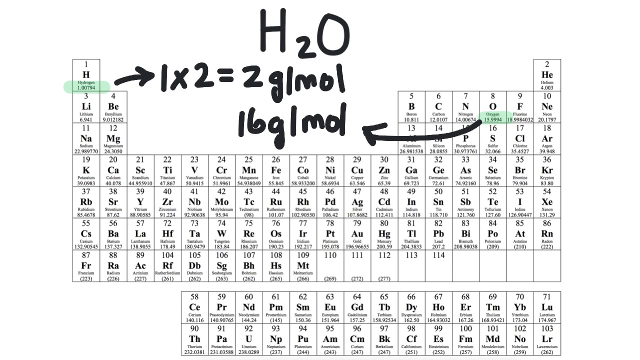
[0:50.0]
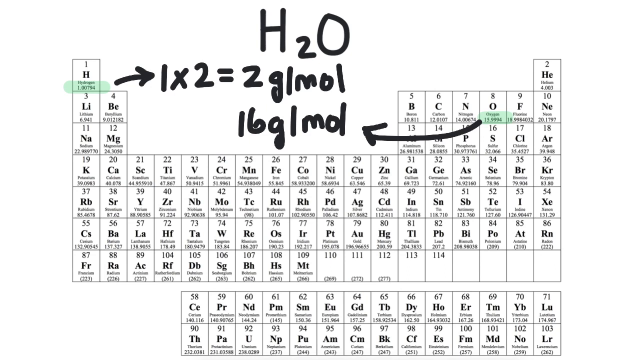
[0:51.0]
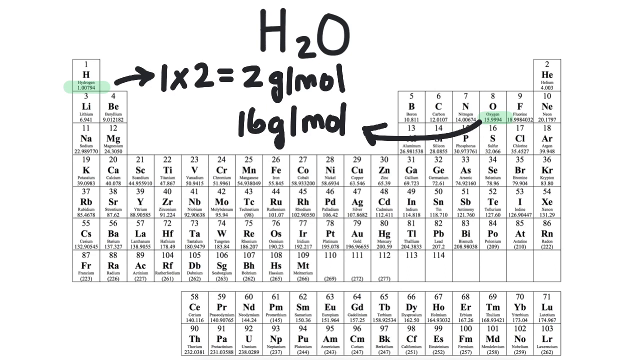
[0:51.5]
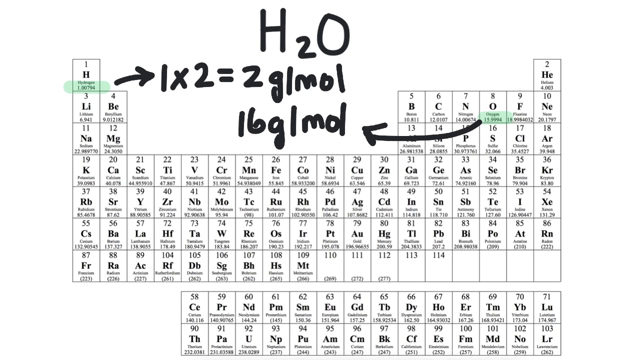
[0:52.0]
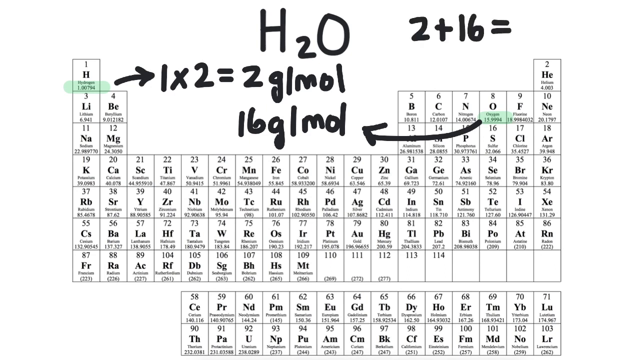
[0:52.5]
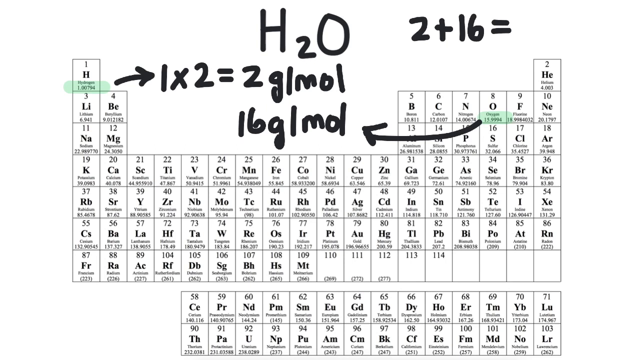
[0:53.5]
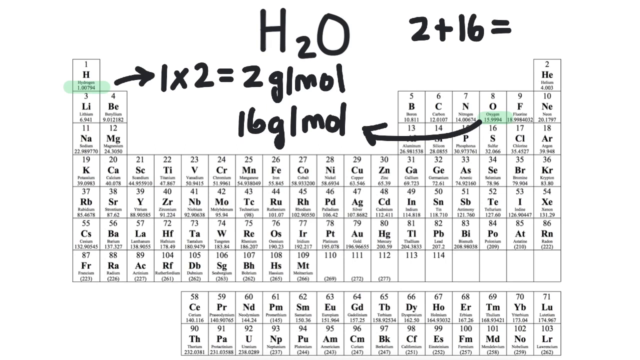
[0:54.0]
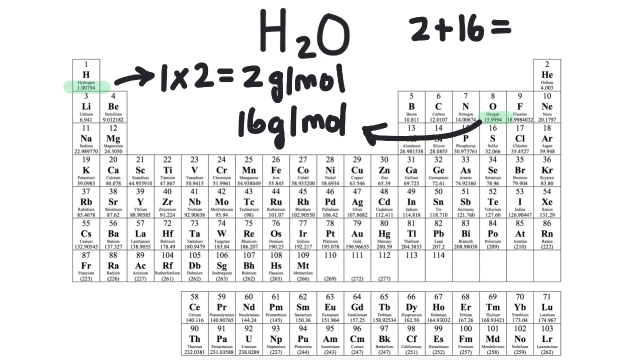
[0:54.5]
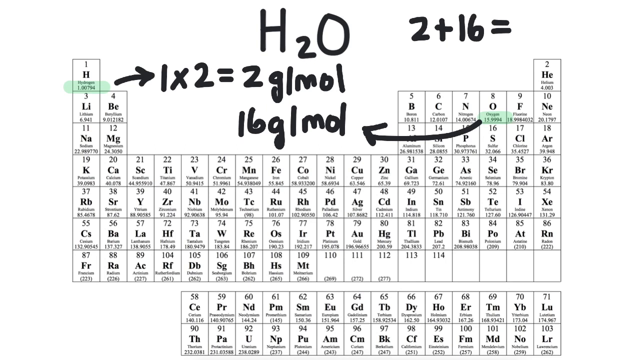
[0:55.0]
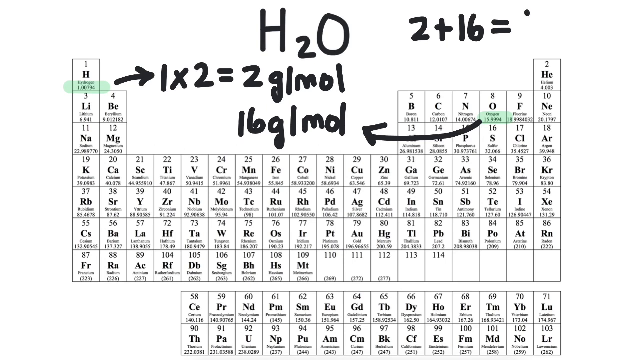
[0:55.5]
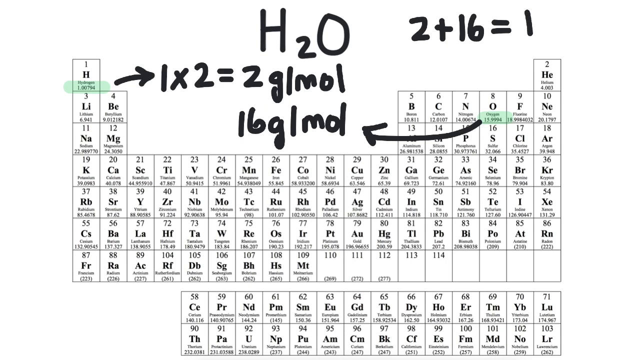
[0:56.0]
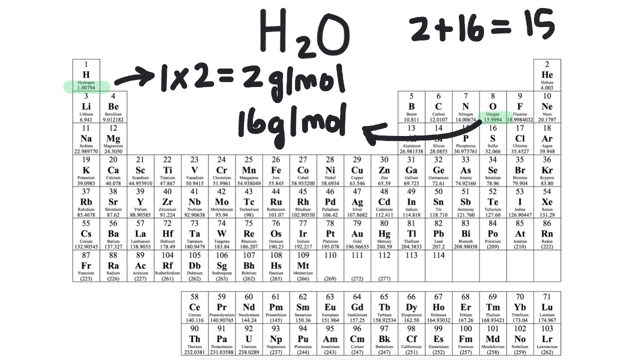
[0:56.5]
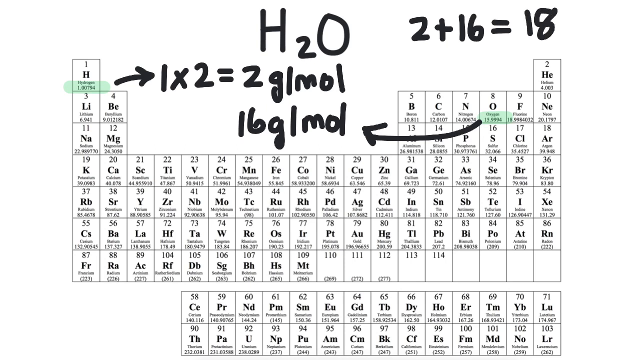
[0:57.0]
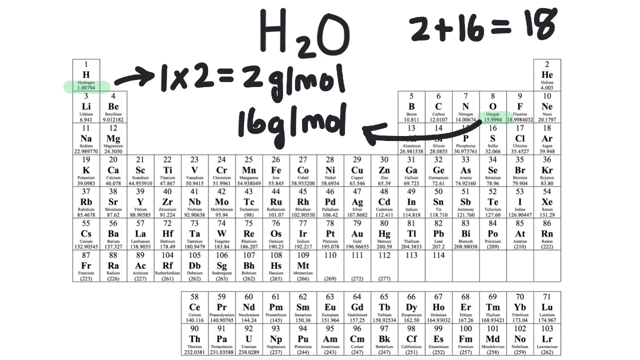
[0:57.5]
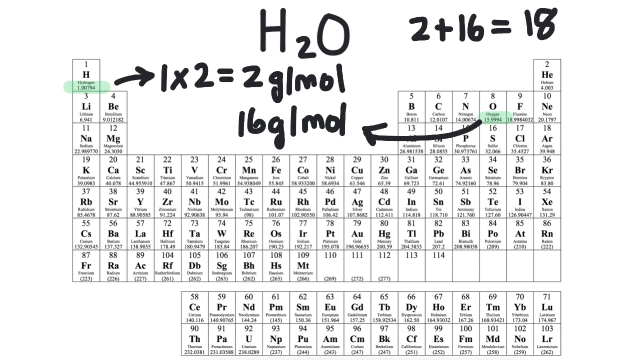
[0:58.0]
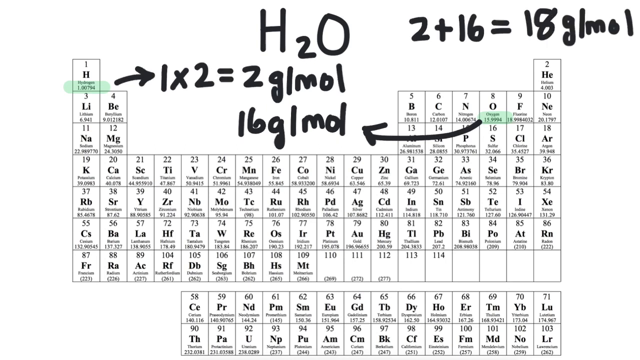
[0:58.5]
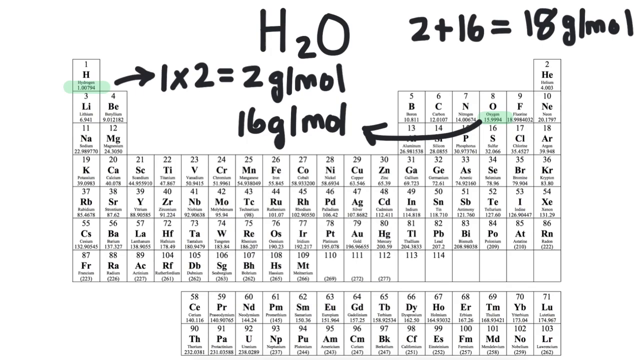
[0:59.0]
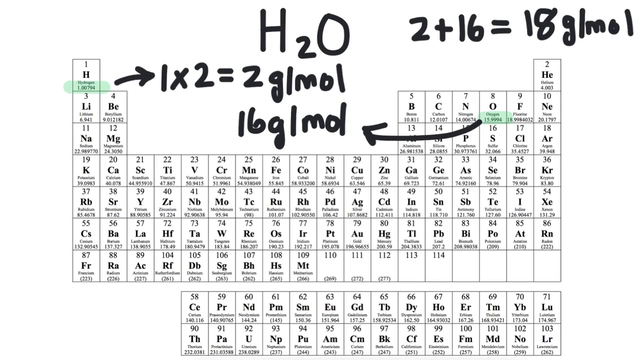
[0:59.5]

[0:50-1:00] Hydrogen and oxygen are shown on the Mendeleev table along with a problem to solve. The calculation shows 1 times 2 in g/mol for hydrogen, 16 g/mol for oxygen, and 2 plus 16 equals 18 g/mol.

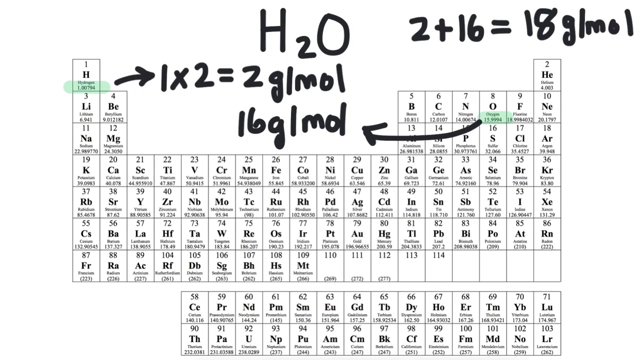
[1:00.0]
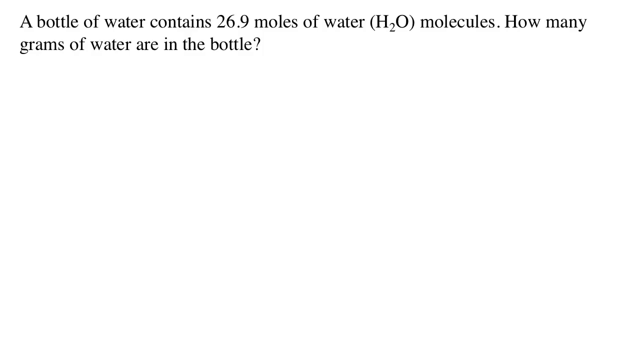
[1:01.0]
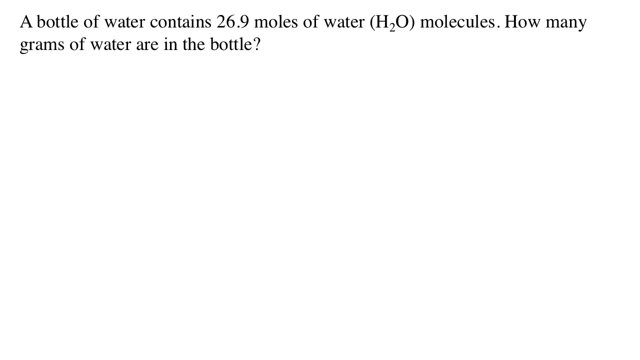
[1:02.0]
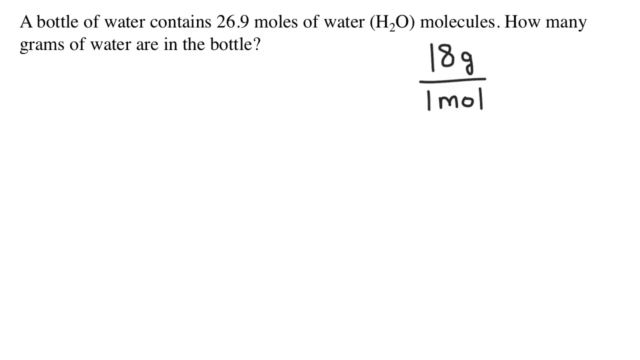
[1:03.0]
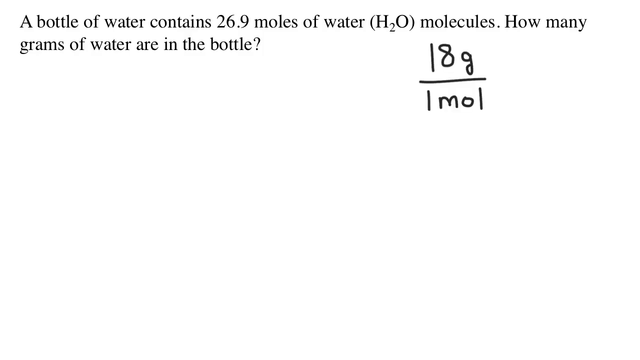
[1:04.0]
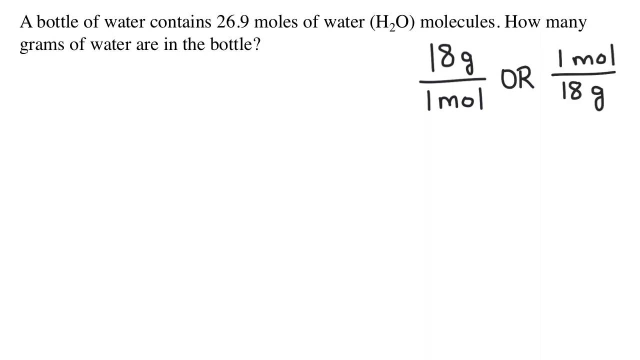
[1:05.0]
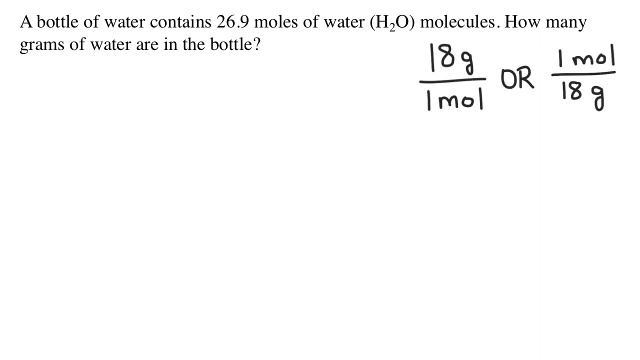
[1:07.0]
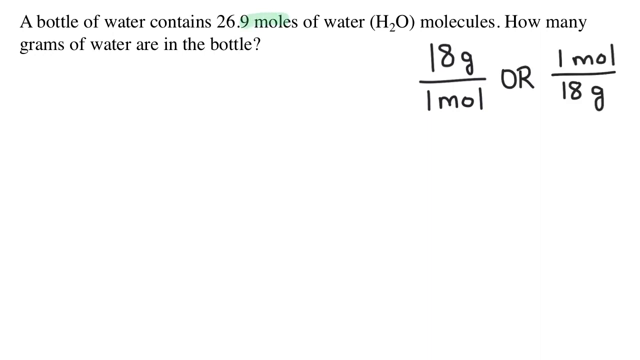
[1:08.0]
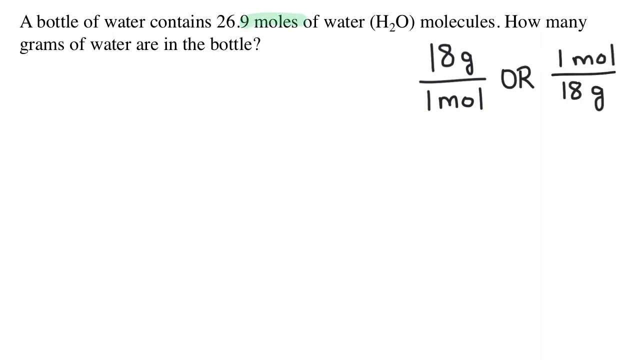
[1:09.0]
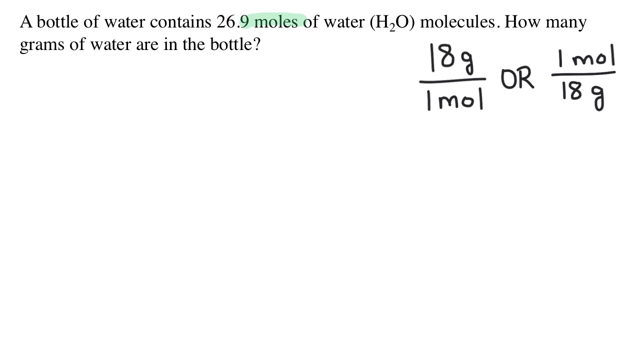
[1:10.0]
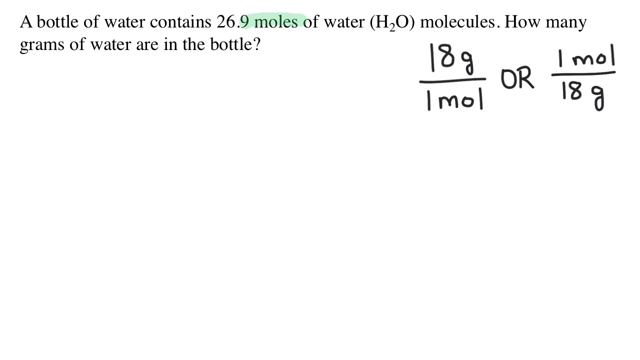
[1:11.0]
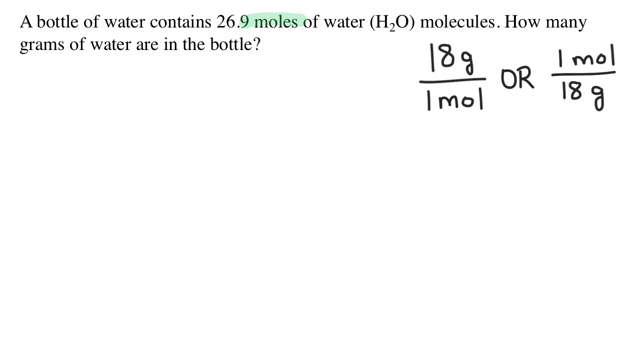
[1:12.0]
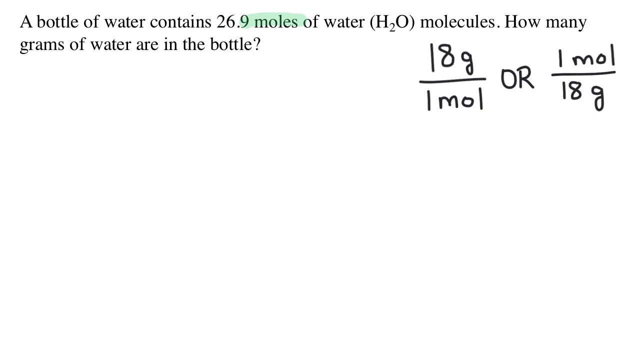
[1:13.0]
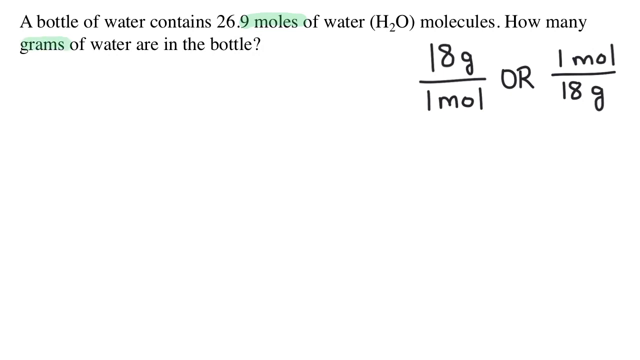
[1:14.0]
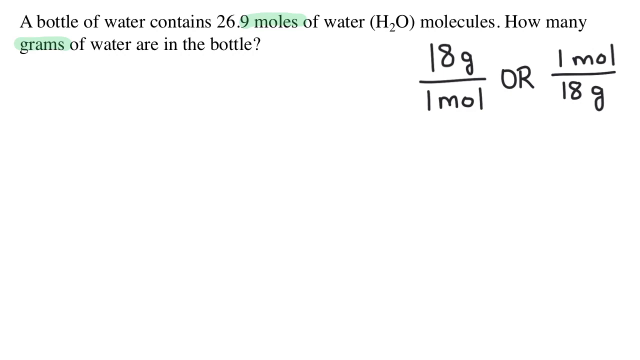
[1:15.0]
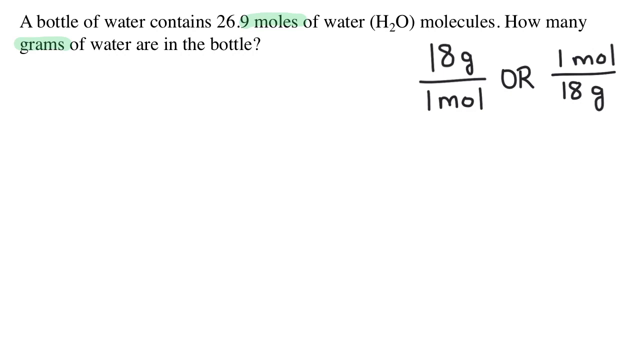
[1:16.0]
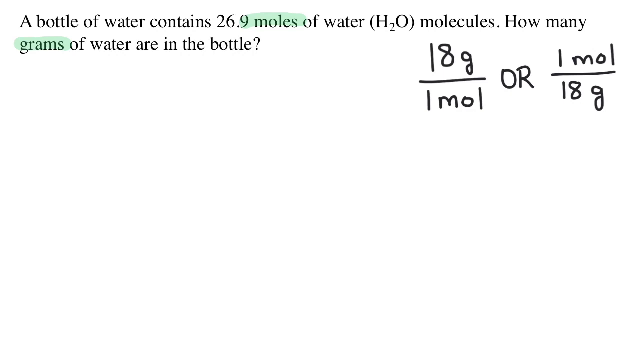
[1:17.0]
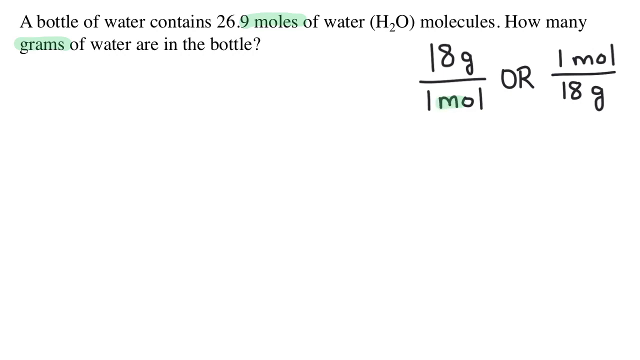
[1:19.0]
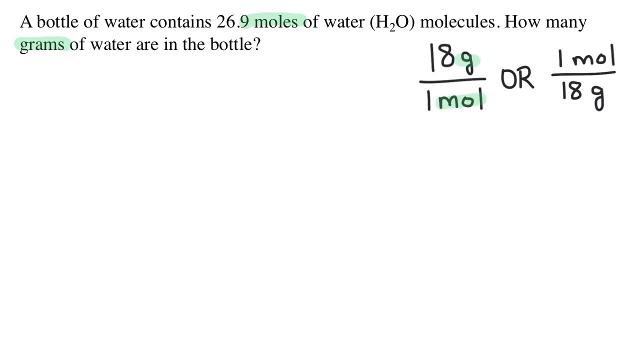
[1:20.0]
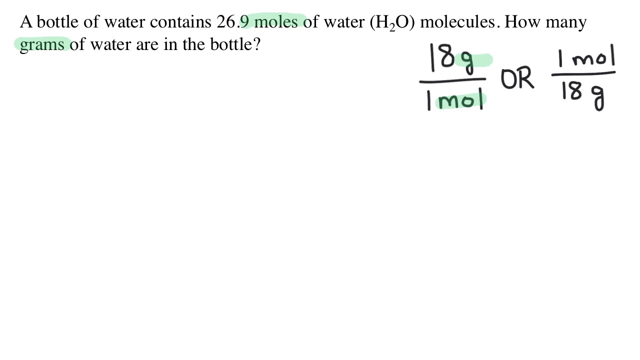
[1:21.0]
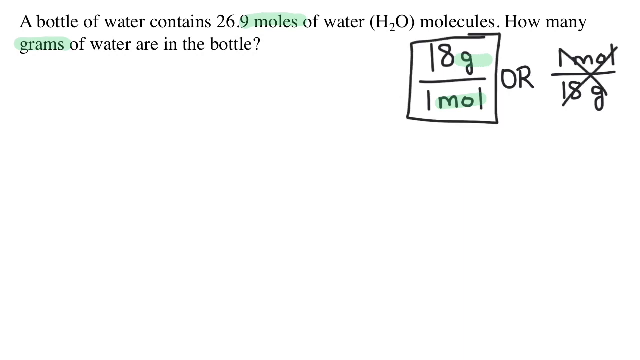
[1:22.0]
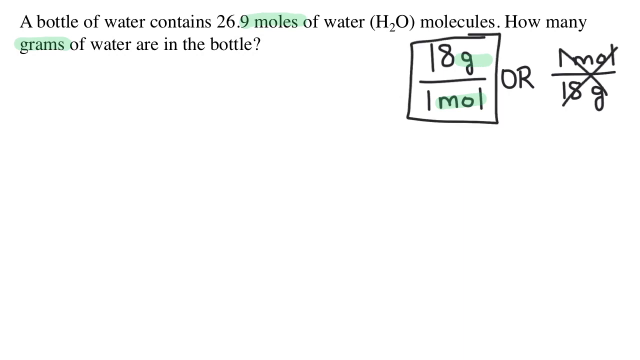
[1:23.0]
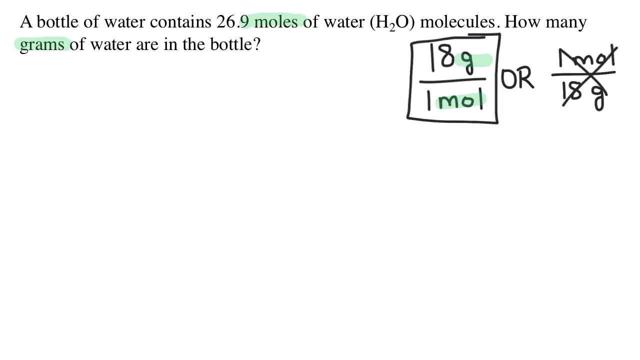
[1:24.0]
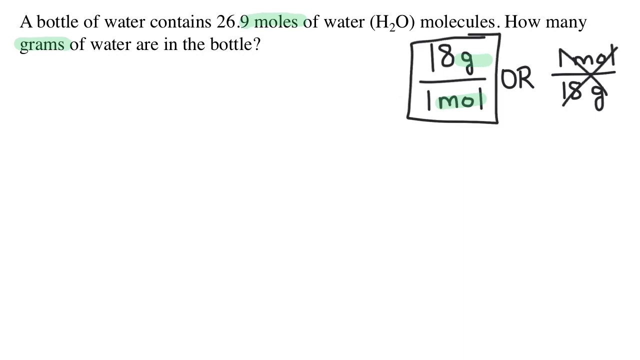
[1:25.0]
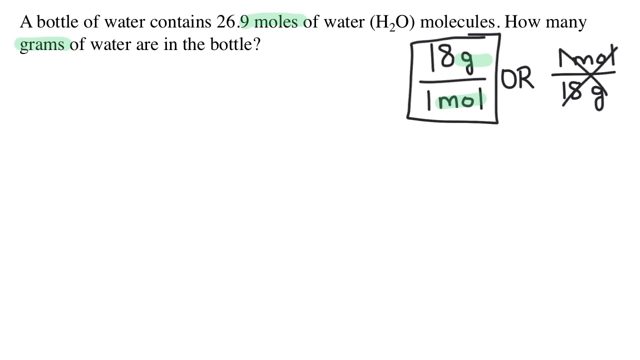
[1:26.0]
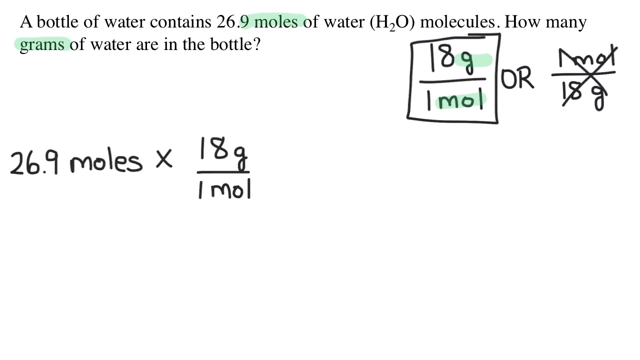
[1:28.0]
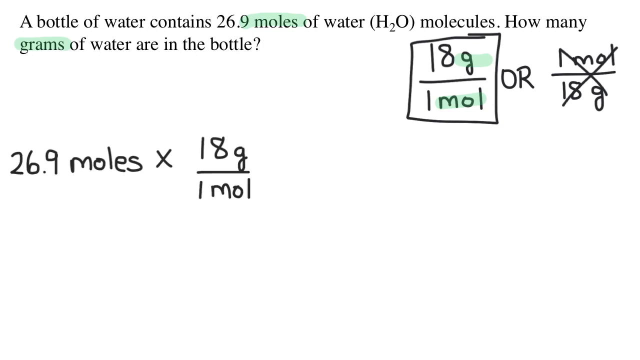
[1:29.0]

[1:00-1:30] The problem appears on screen: "a bottle of water contains 26.9 moles of water H2O molecules how many grams of water are in the bottle." Two formulas appear, 18 g per mol and mol per 18 g, and the person highlights the key words with a green marker: moles, grams, g and mole. The first formula is chosen, and a new formula follows: 26.9 moles to 18 g per mol.